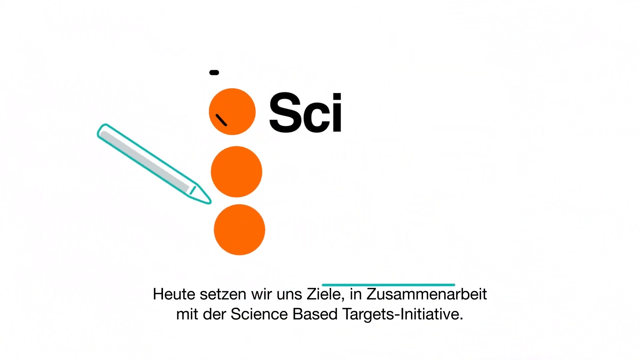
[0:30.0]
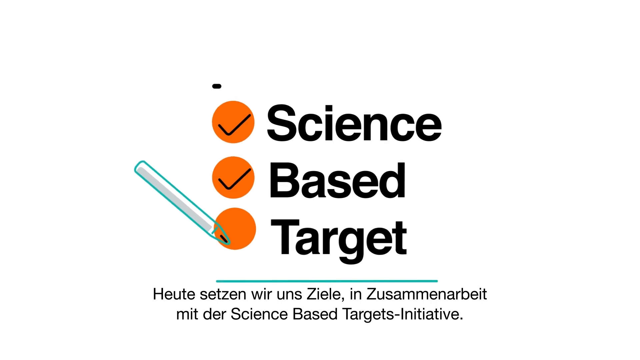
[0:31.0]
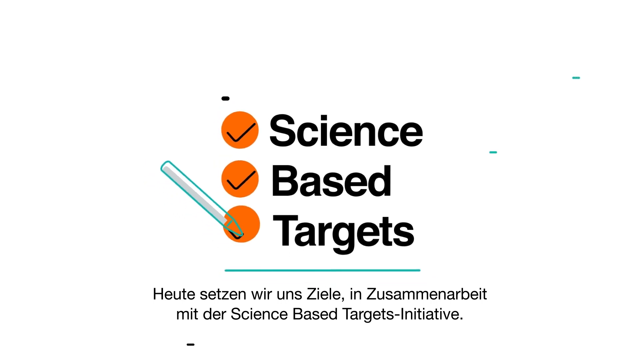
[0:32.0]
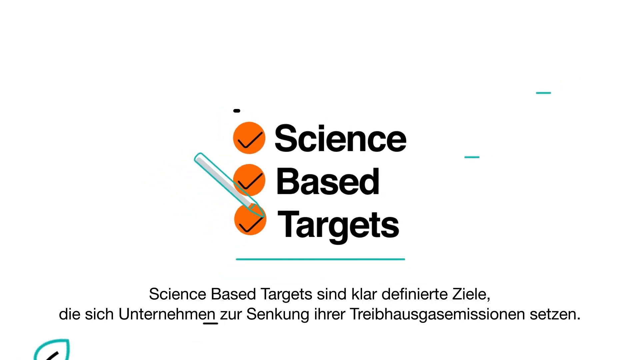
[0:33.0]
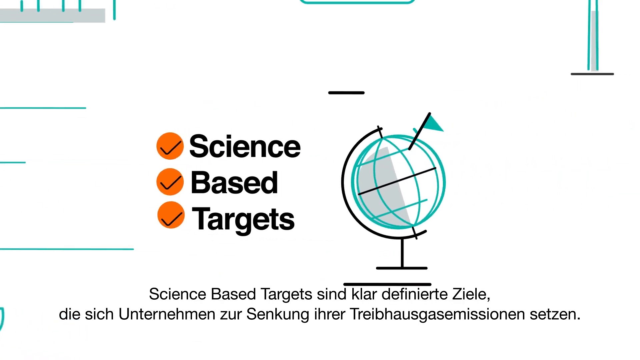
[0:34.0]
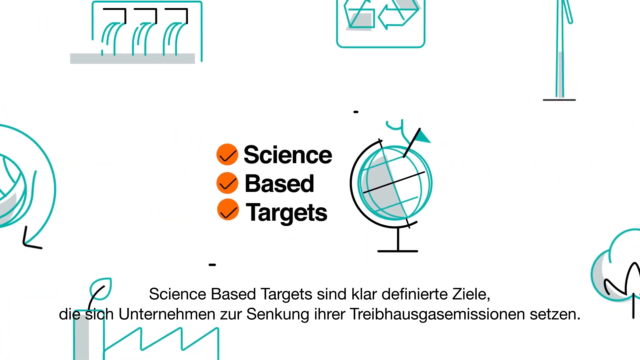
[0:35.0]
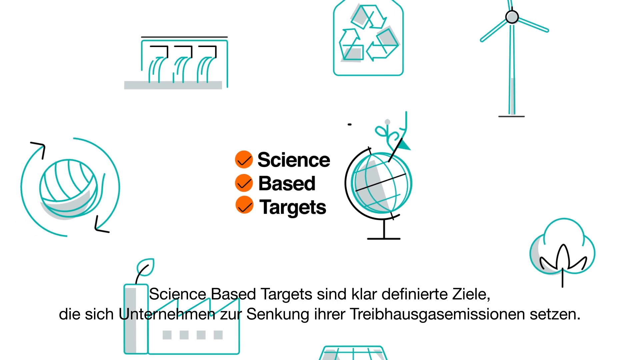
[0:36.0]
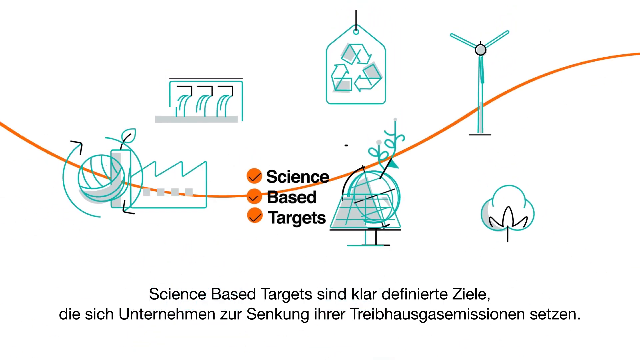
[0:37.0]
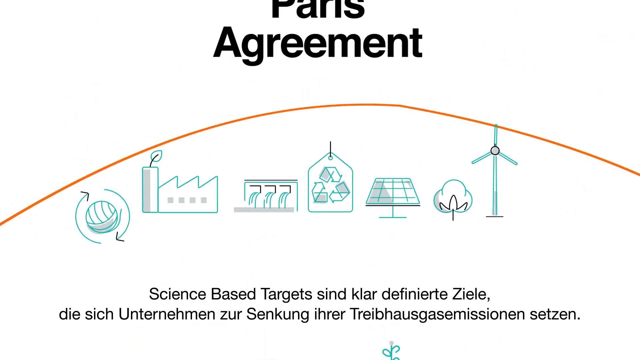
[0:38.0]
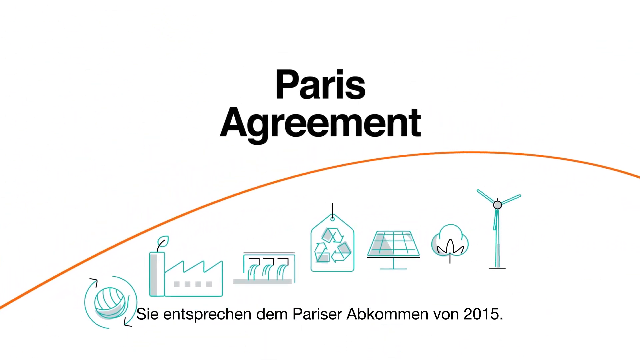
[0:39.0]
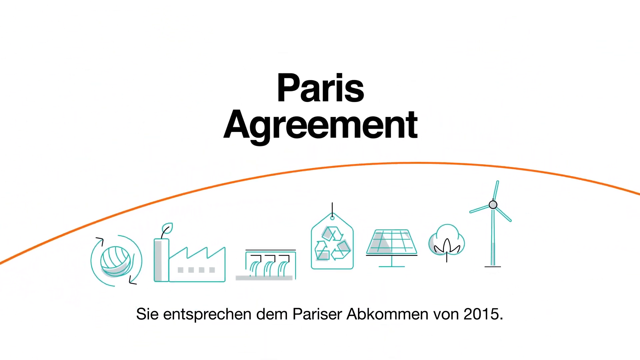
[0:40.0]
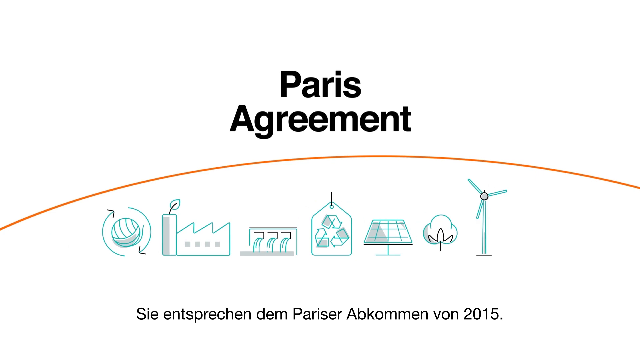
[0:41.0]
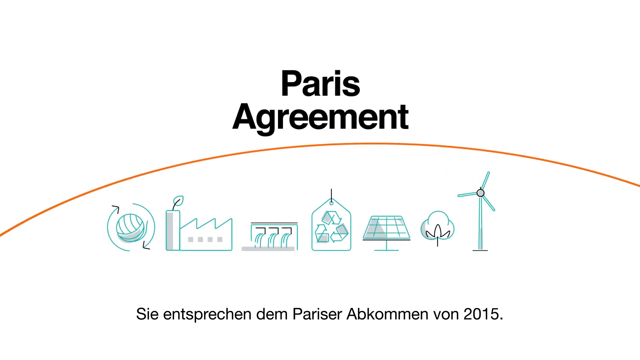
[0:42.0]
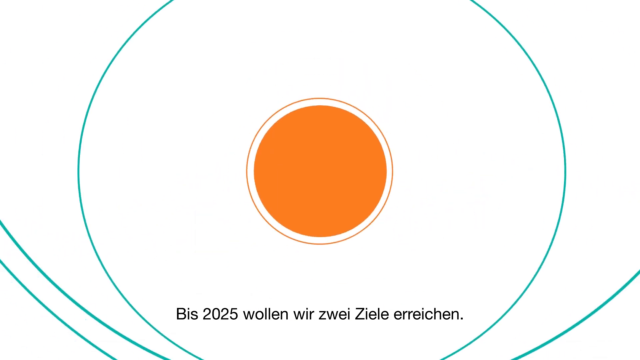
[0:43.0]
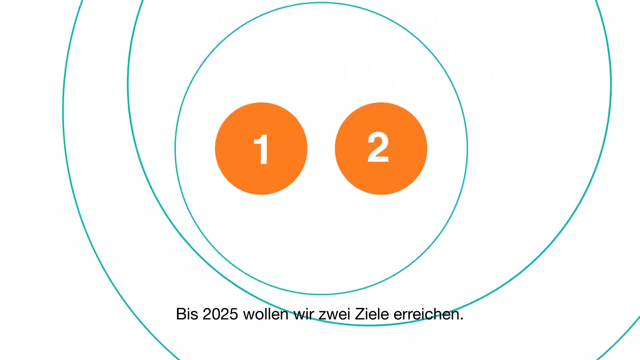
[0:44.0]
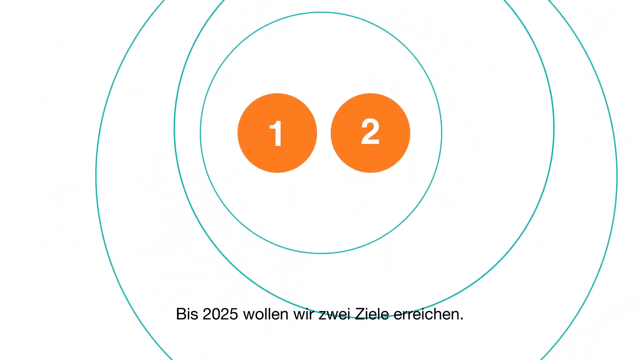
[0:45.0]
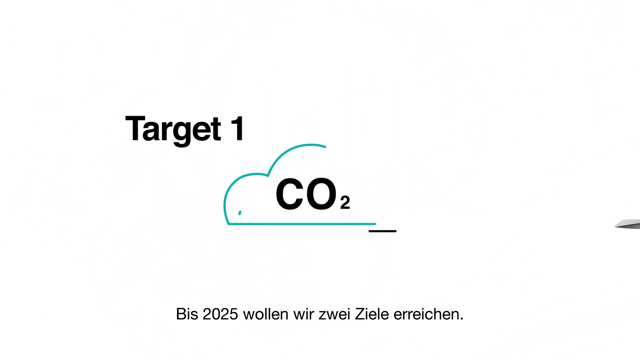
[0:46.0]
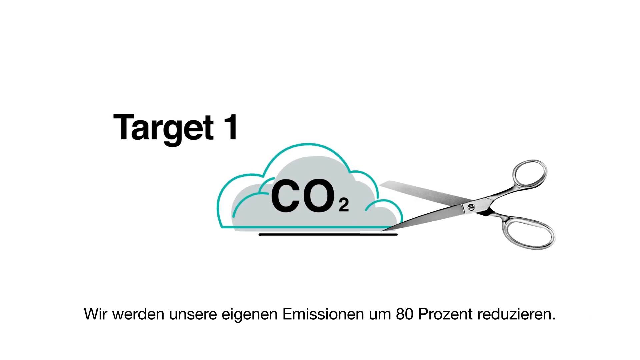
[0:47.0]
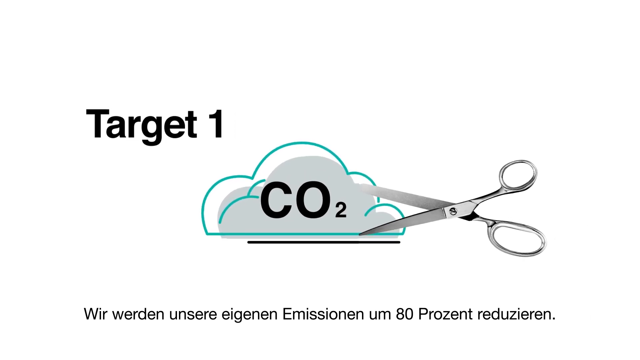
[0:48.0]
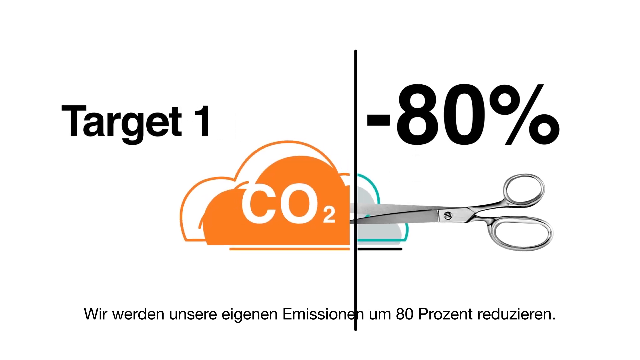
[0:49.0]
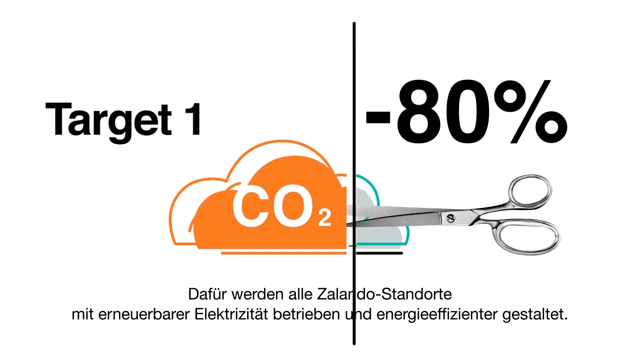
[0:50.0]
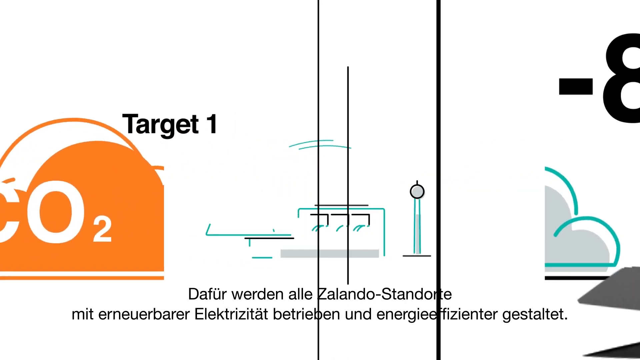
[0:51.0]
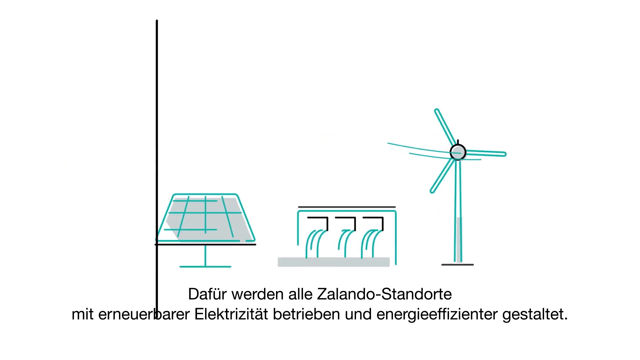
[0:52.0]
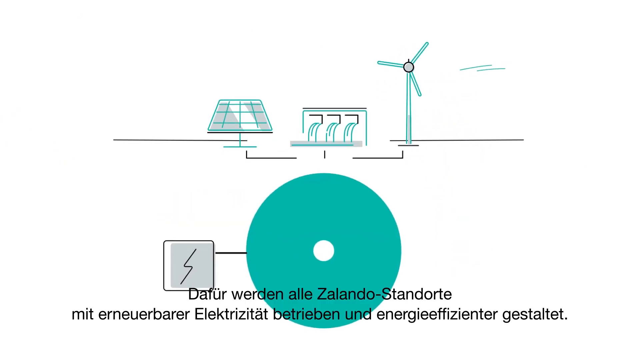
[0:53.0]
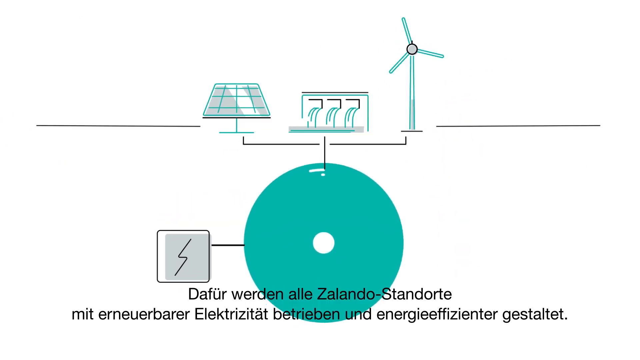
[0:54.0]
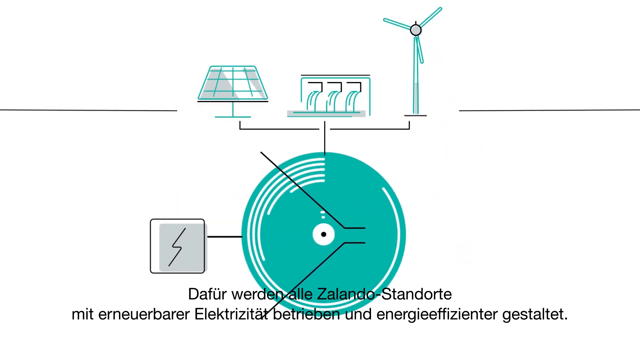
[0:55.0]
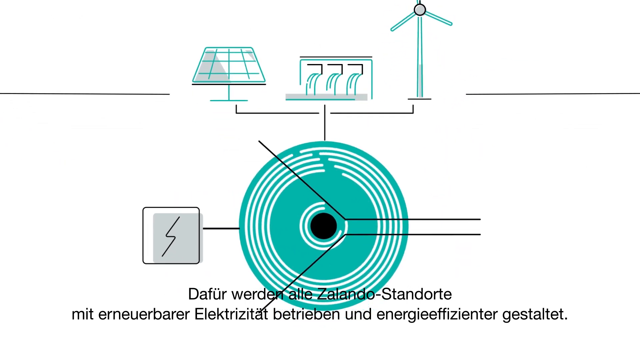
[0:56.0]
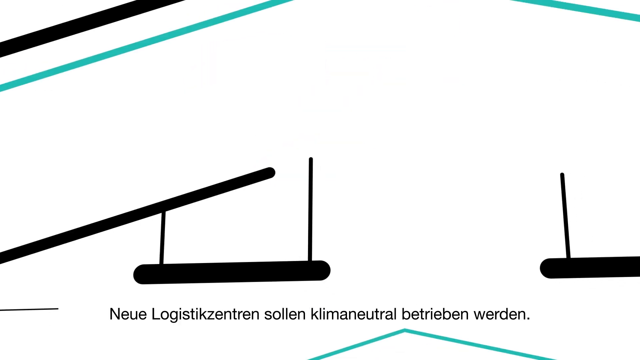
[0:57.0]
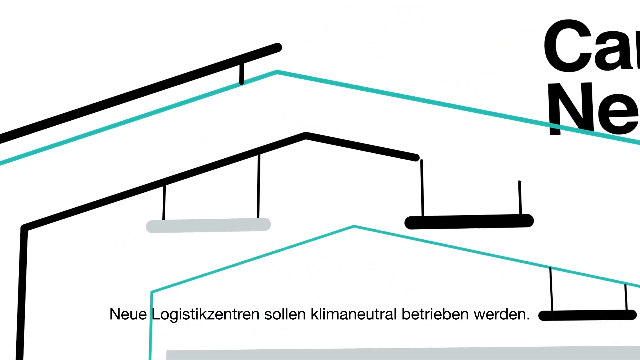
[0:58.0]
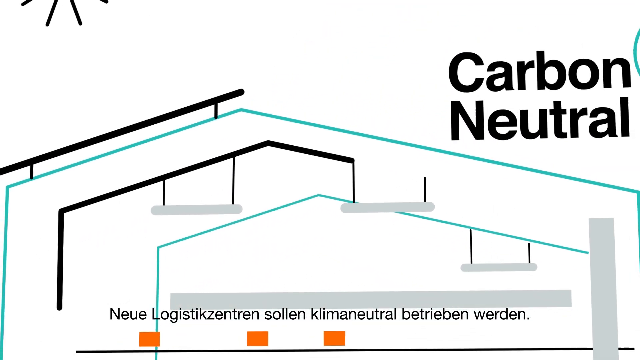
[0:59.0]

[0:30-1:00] A white phone displays the words "science-based" and "targets" in black text, with circles to the left of each word; the circles are orange with black check marks in them. The view zooms out to a sort of infographic with different animations, including an animated windmill, an animated globe, an animated recycling tag, an animated tree and some other things. An informational screen then shows the Paris Agreement and a sort of infographic related to it, then transitions to a screen with orange circles containing the numbers one and two, showing target one: cutting CO2 emissions by 80%, along with a focus on renewable energy. No humans or animals appear.